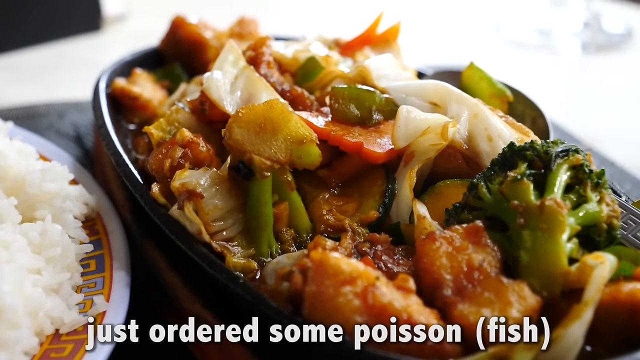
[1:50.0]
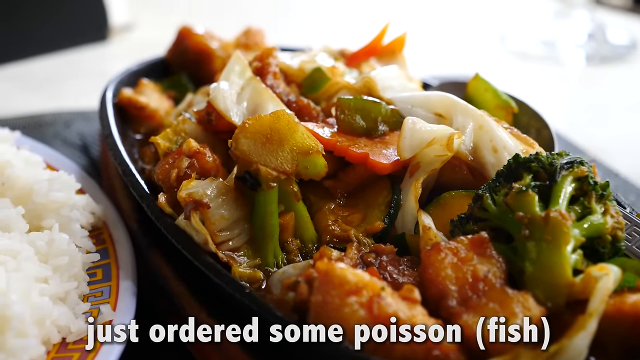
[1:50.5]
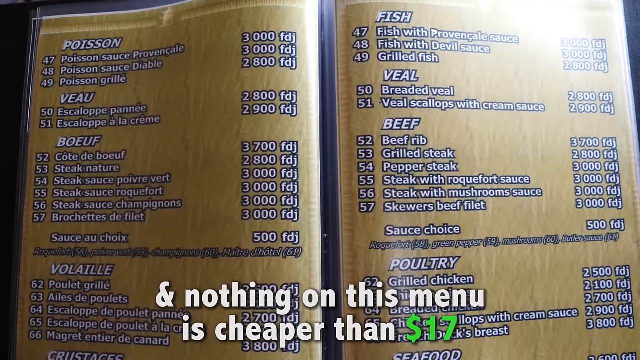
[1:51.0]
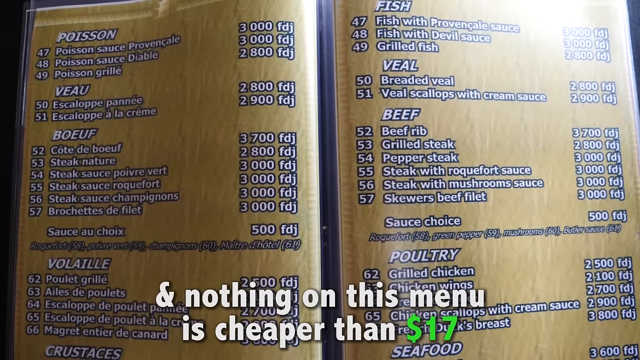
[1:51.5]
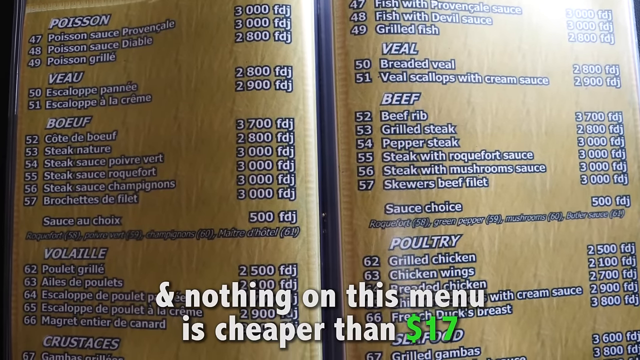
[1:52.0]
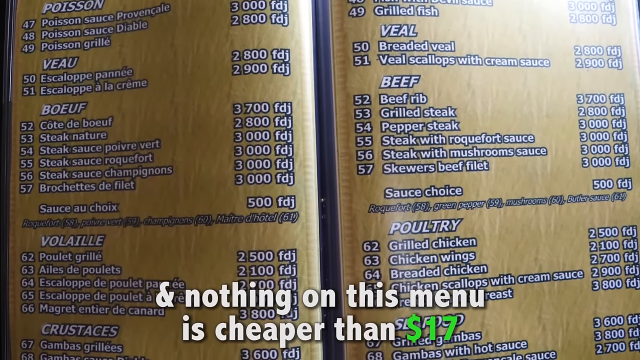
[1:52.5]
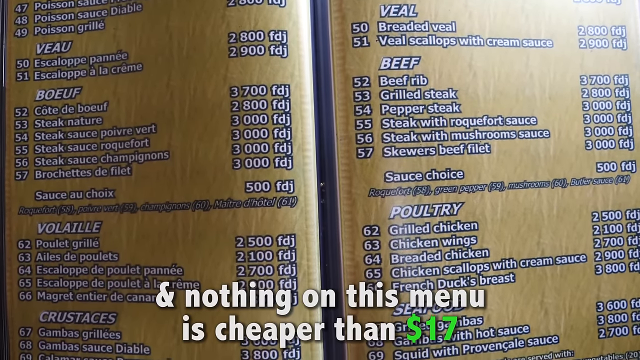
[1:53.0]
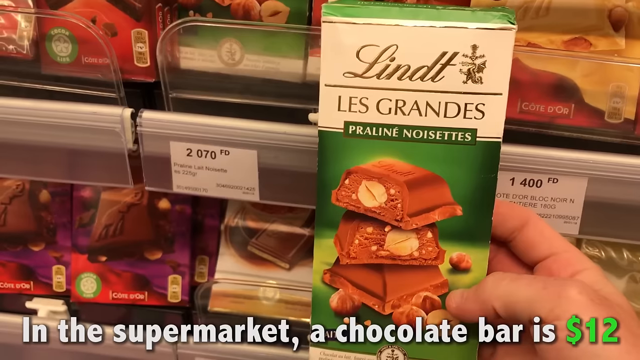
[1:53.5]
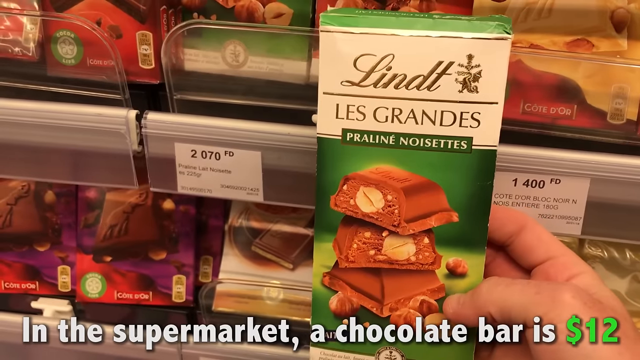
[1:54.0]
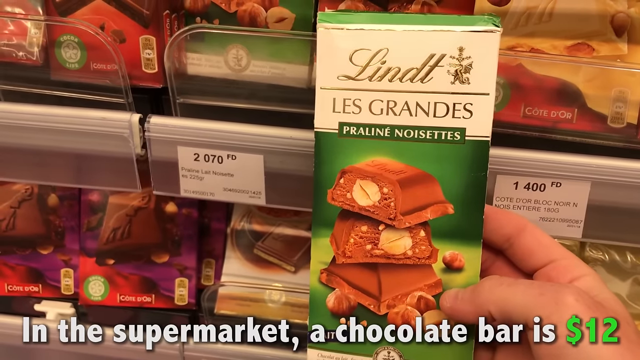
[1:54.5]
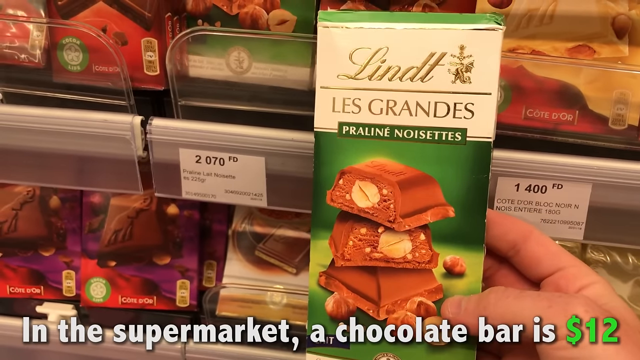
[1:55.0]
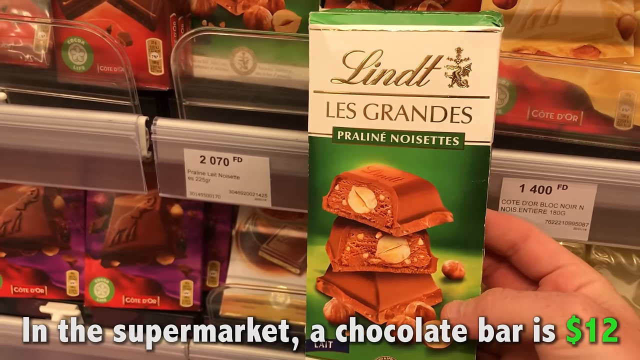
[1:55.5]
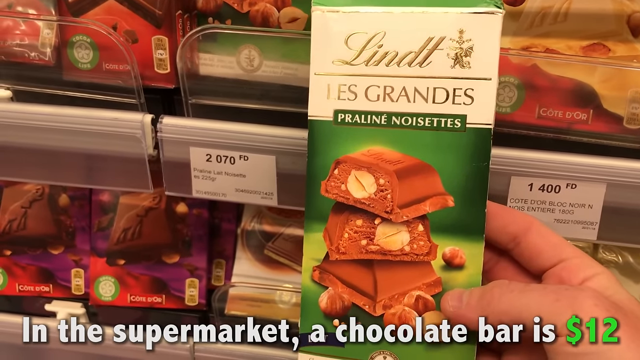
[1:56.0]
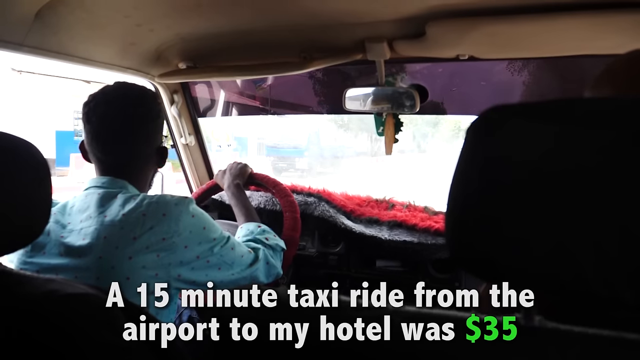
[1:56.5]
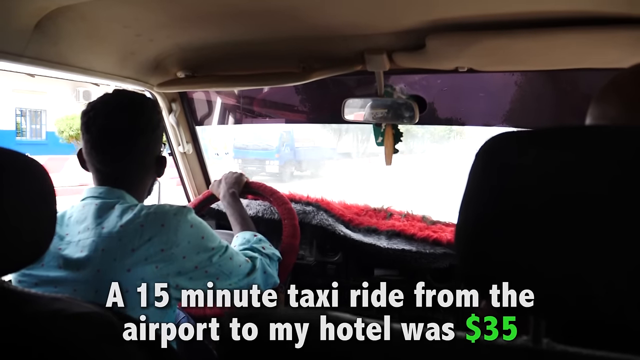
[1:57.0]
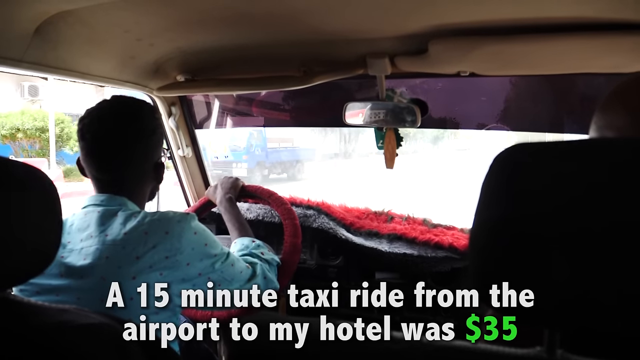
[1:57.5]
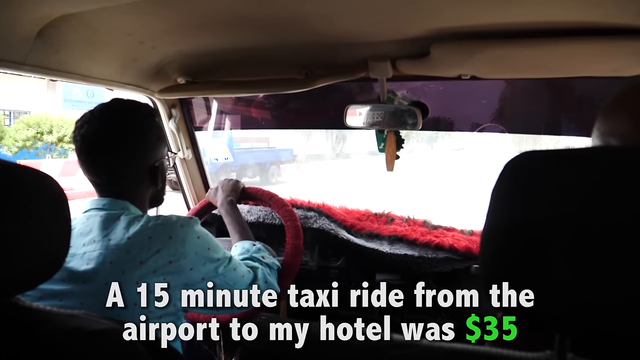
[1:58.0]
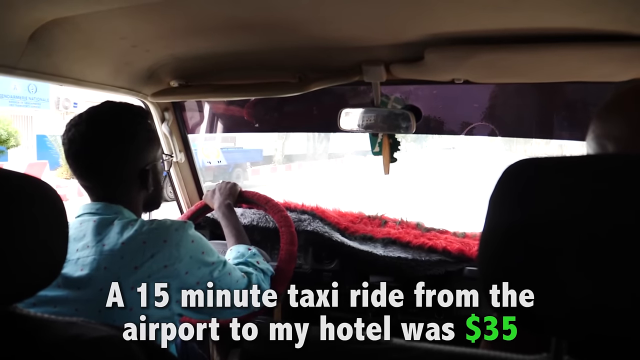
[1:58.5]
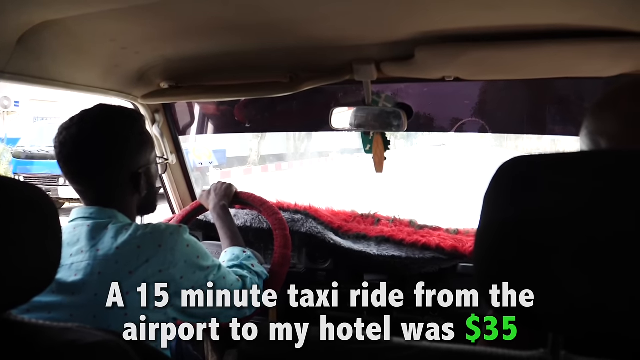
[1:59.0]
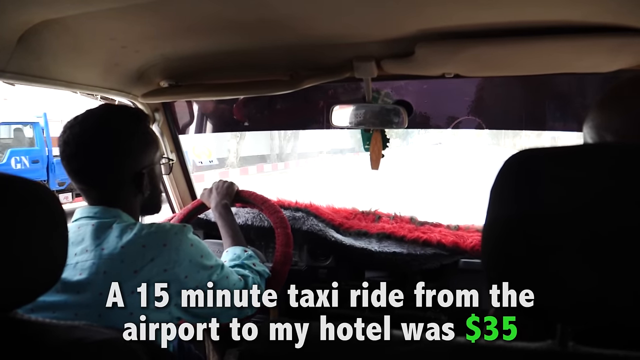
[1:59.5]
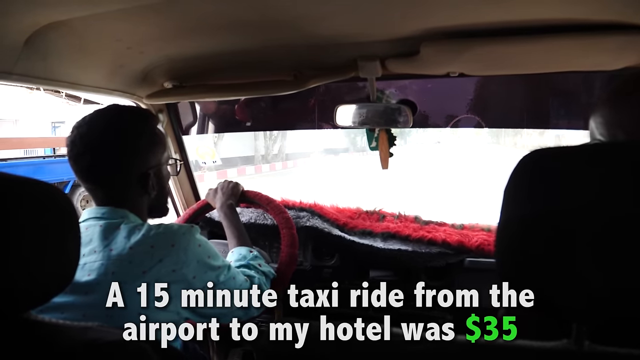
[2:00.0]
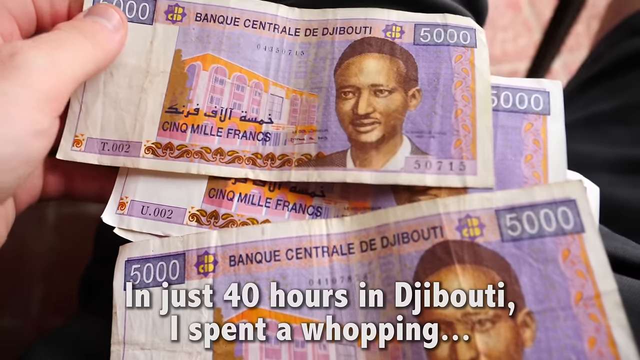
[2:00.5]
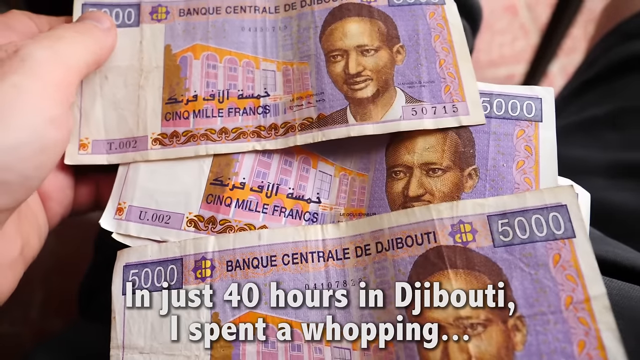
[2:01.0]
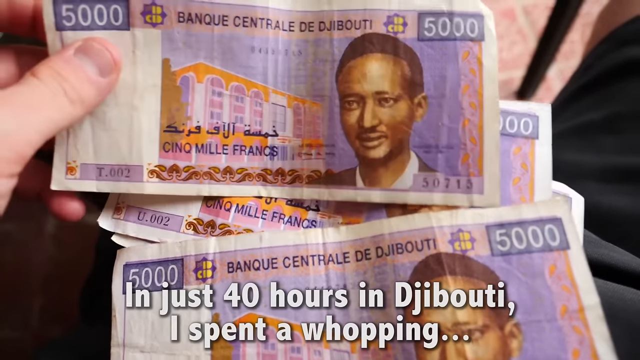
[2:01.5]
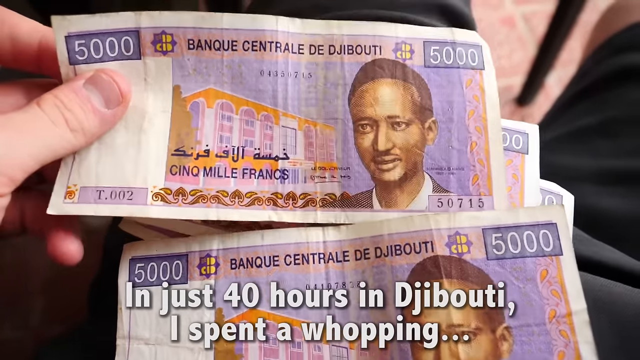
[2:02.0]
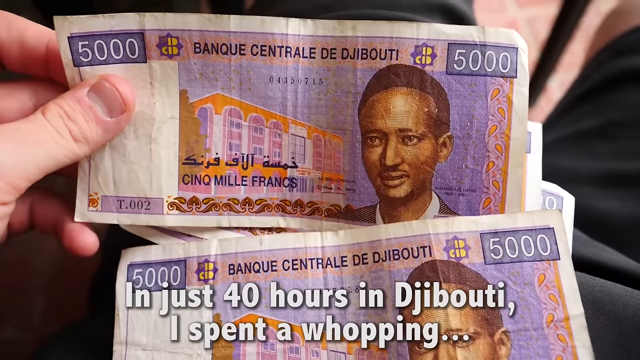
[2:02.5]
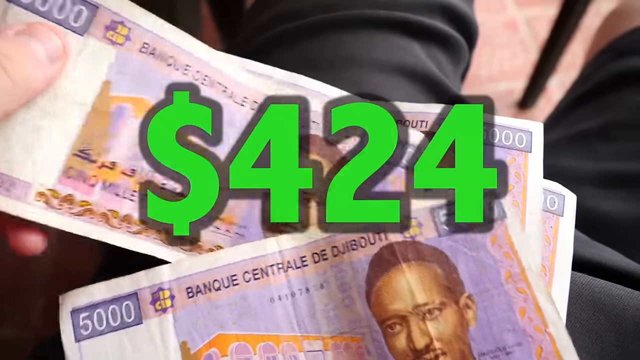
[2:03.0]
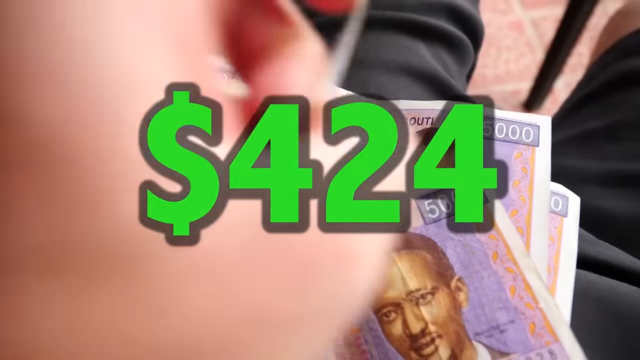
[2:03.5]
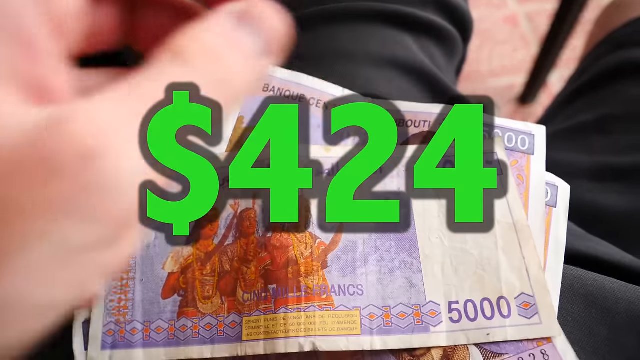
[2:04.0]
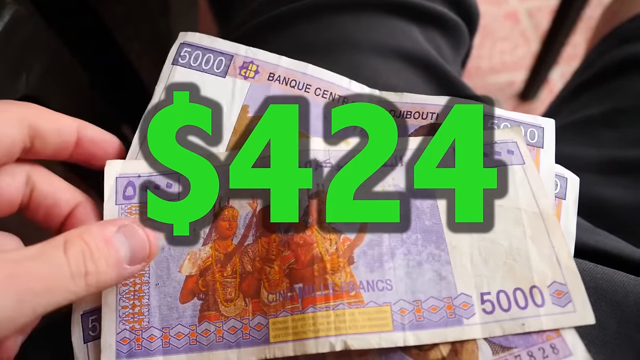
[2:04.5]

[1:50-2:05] The man is in the restaurant where he had his meal, and then the menu with a list of prices is shown; he says nothing on it was cheaper than $17. Then he is in a shop holding a bar of Lindt chocolate, with shelves behind him; the logo partially covers the price, which apparently says $11. He is then back in the taxi with the driver. Text says he spent $424 and 40 hours in Djibouti, and that a 15-minute taxi ride from the airport to the hotel was $35. The same taxi cab keeps being shown, with prices that cannot be read. He flips the money over.